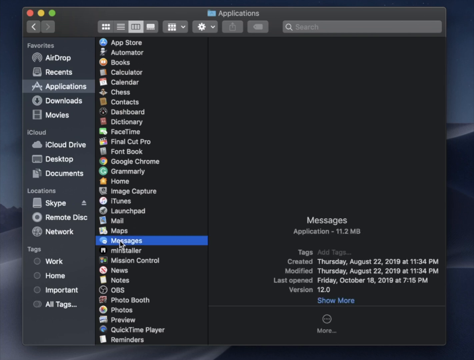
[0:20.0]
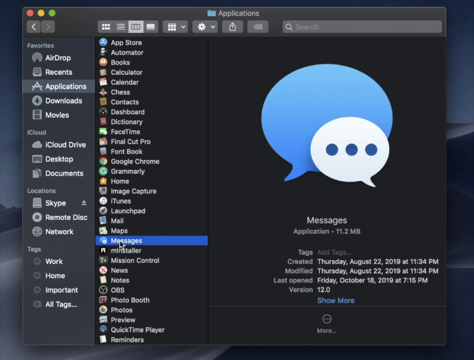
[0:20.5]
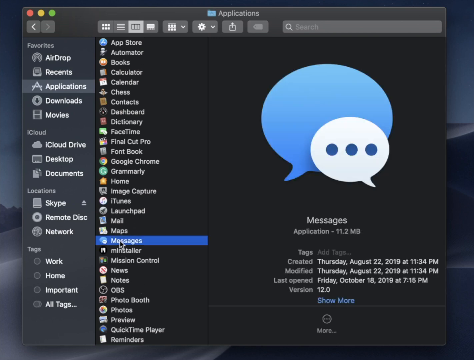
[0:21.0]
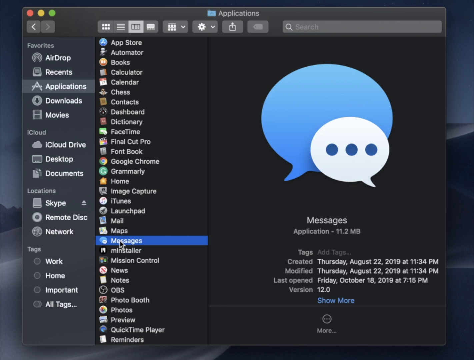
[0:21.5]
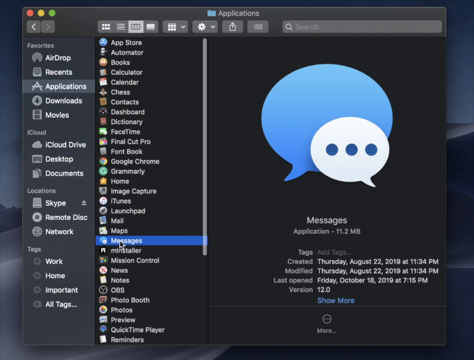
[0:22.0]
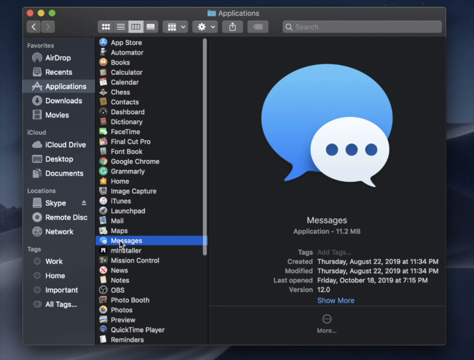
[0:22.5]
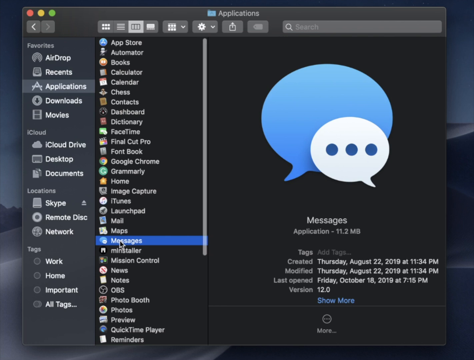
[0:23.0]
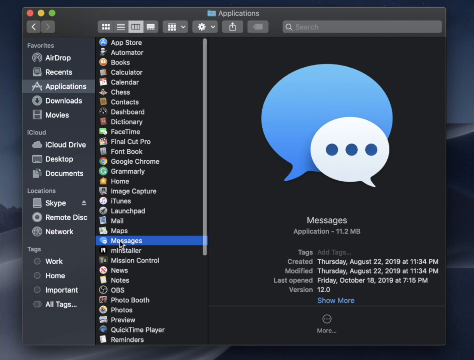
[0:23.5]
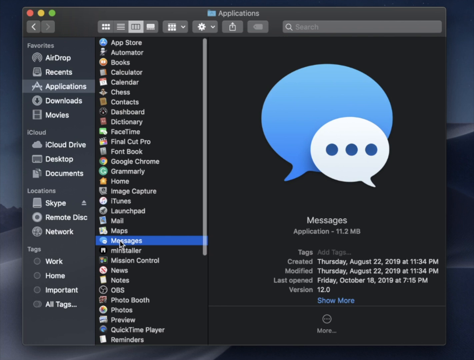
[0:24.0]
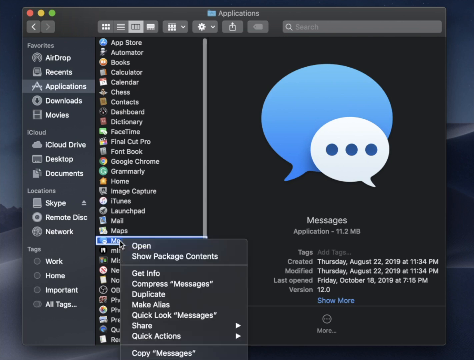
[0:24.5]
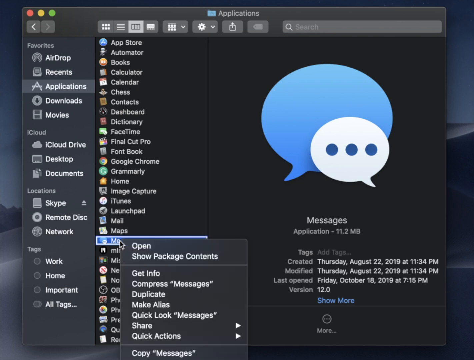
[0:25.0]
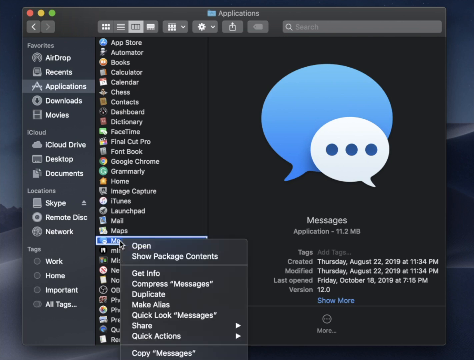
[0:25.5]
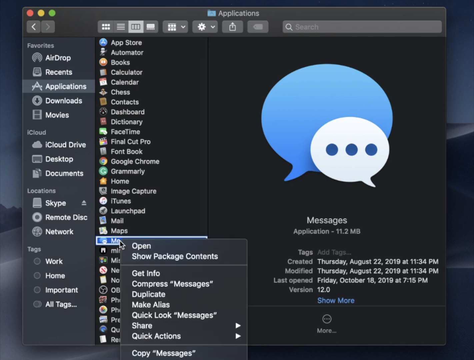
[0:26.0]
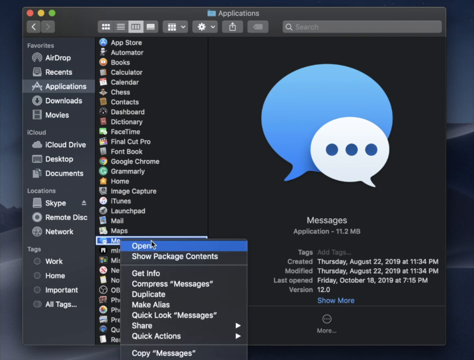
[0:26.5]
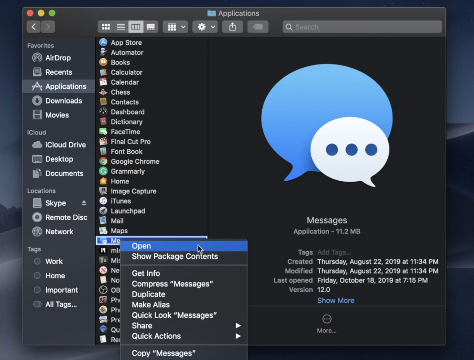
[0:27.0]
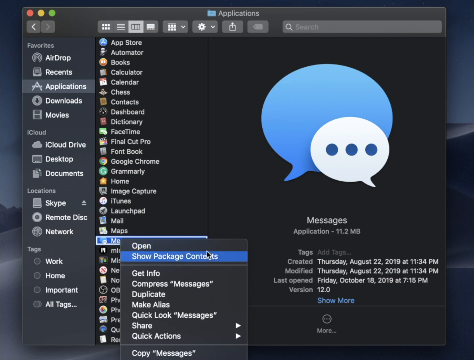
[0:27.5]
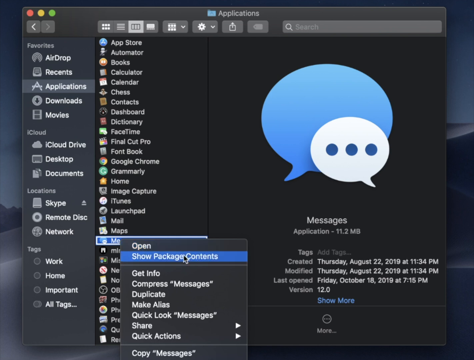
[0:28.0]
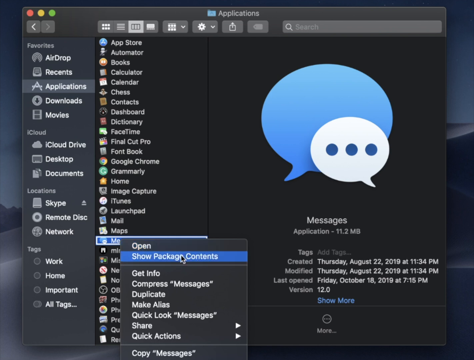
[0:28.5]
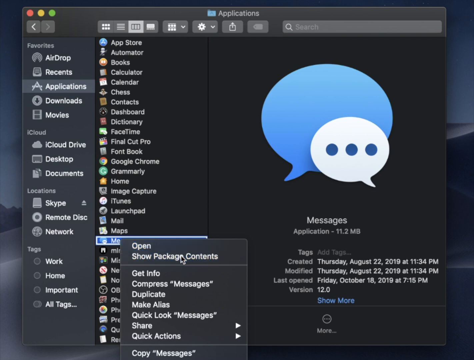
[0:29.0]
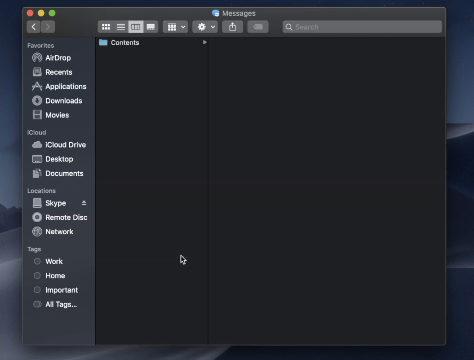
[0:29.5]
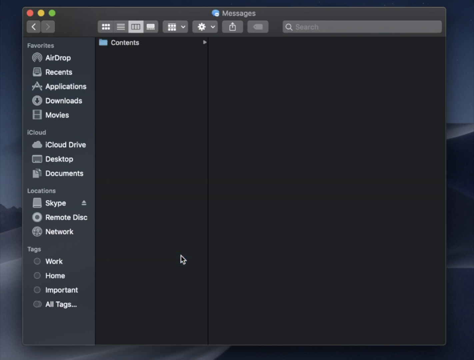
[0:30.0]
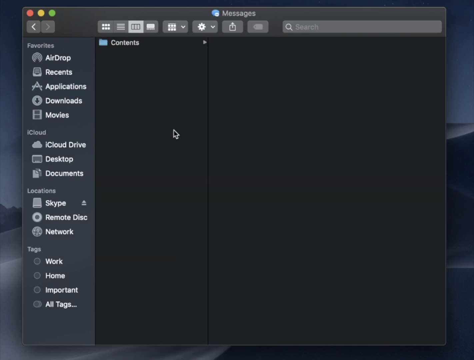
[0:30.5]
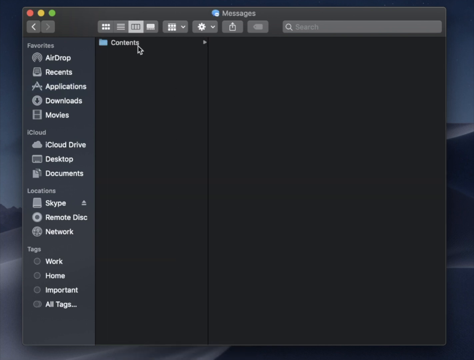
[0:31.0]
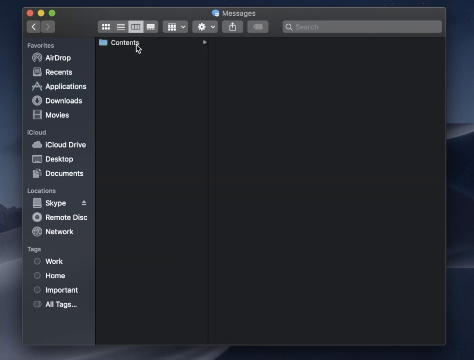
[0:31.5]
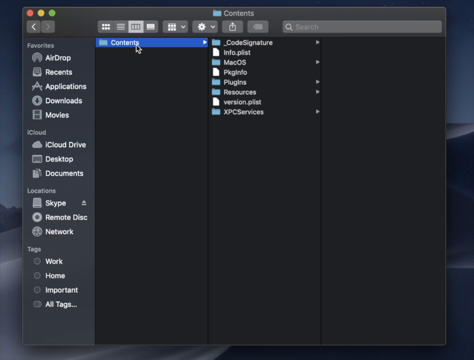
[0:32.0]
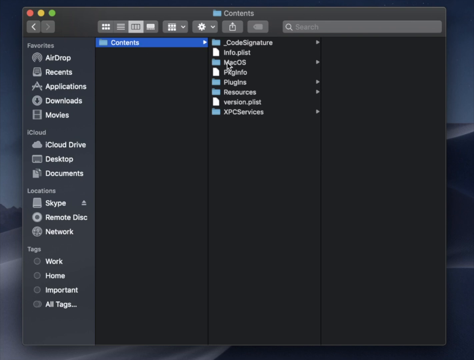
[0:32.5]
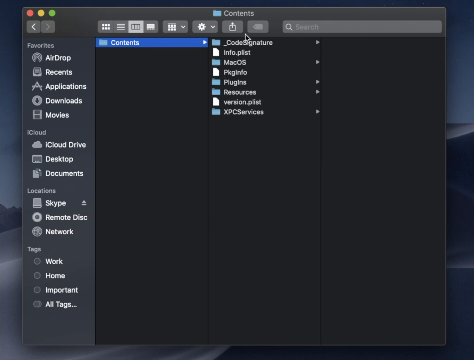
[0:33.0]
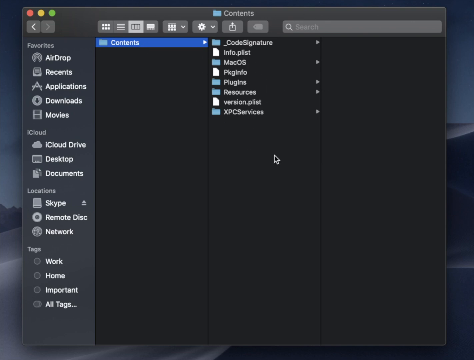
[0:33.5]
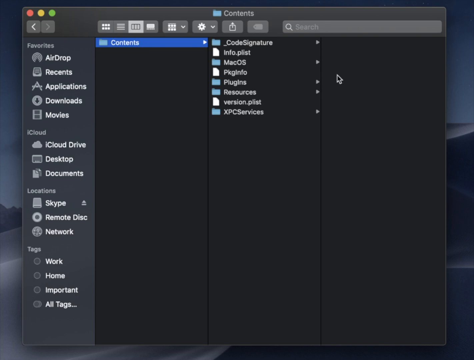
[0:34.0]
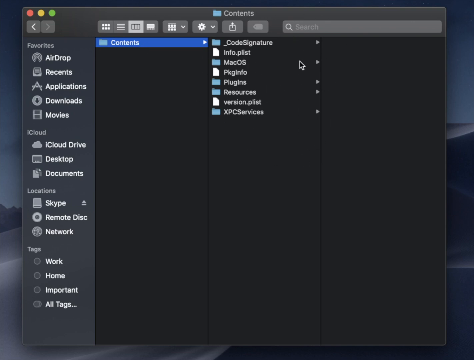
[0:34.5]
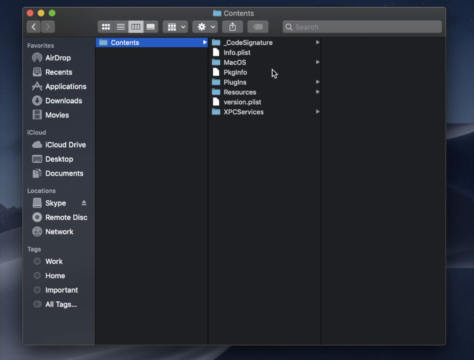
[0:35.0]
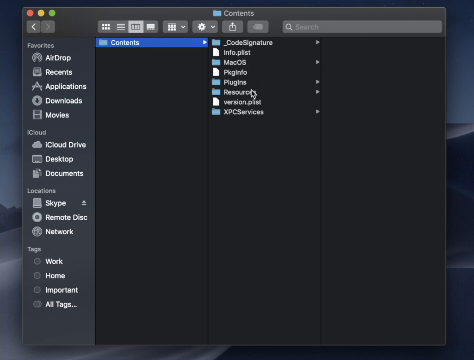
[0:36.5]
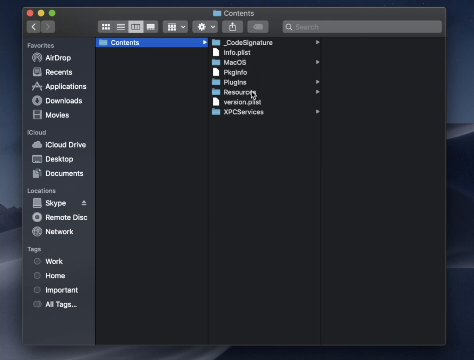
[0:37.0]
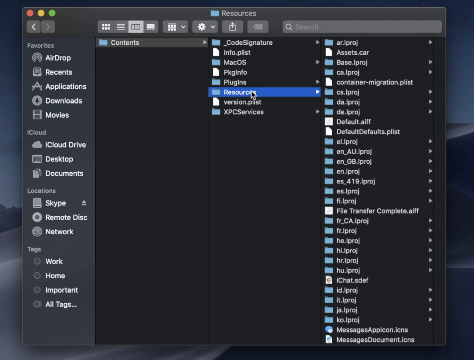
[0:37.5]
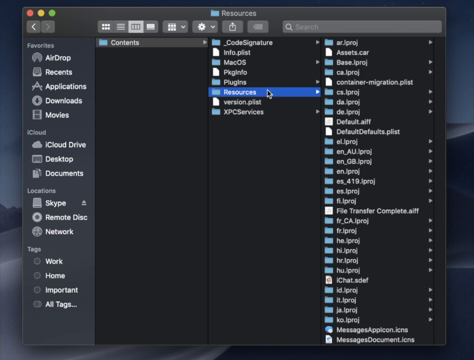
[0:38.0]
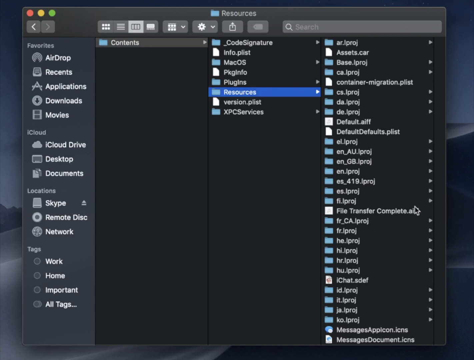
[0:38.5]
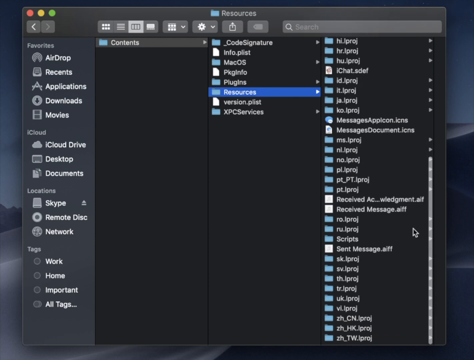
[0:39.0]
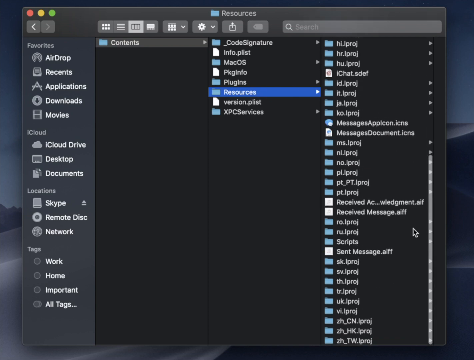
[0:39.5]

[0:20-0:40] He clicks the Messages app, which shows some info. He clicks Show Package Contents, then Contents, which shows the contents of that folder, then Resources, which shows everything inside it. When he clicks on Message, the message icon appears on the right-hand side of the macOS Finder window, like a preview of the file. He seems to be teaching how to solve some kind of macOS problem that involves Show Package Contents. The Finder sidebar apparently shows a Skype application file, a remote disk, a network, his iCloud Drive and an important folder. Finder has a tab-like view, so file info is shown when he clicks on a file.